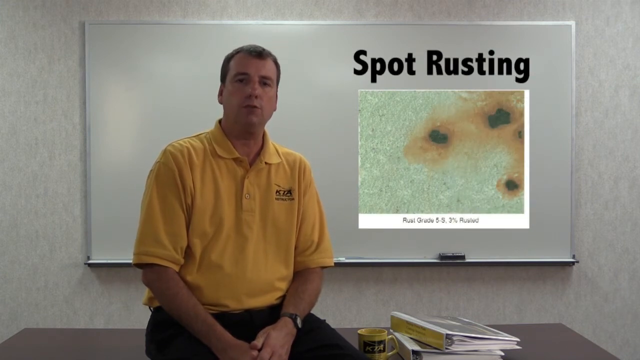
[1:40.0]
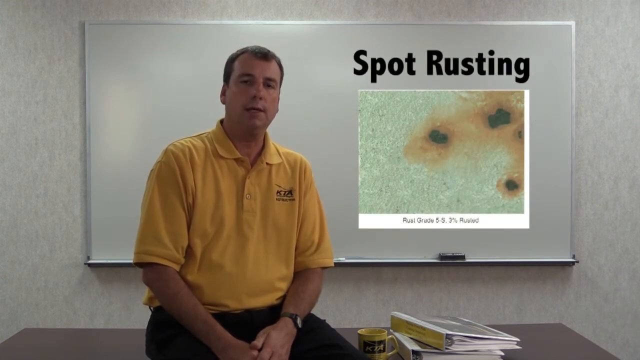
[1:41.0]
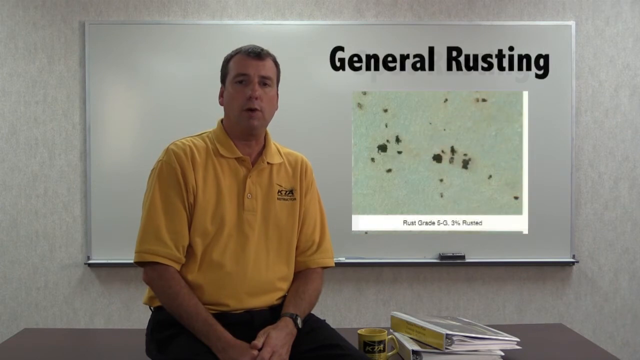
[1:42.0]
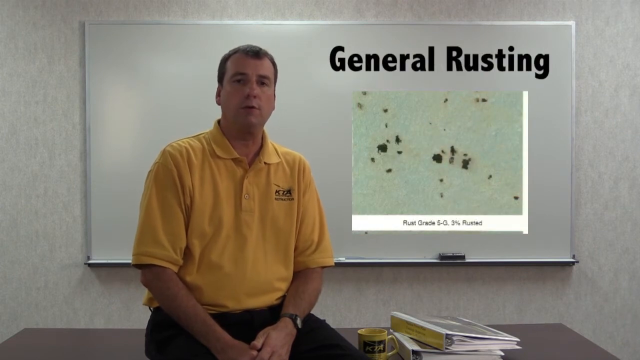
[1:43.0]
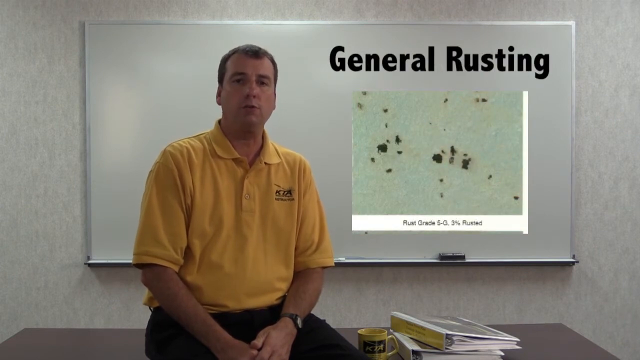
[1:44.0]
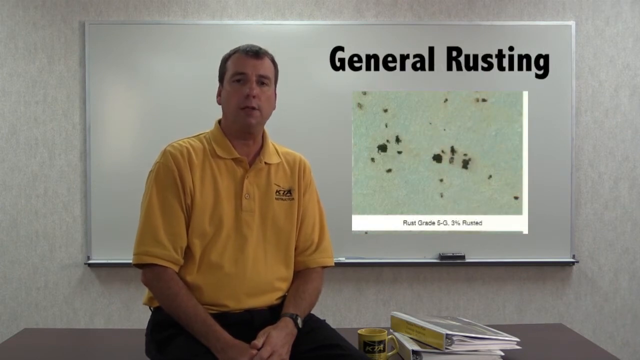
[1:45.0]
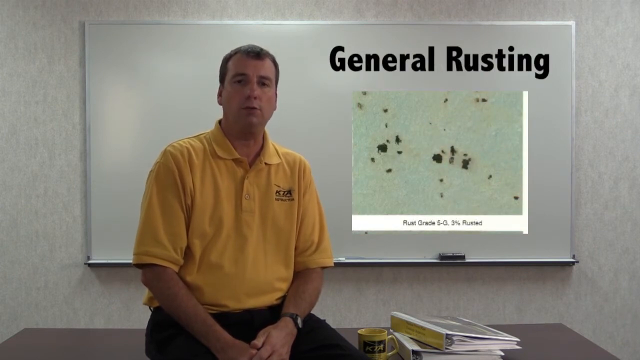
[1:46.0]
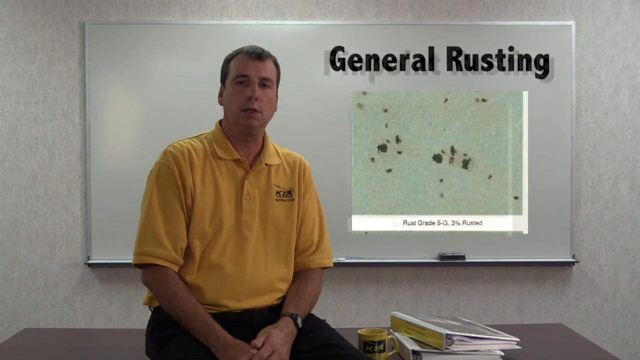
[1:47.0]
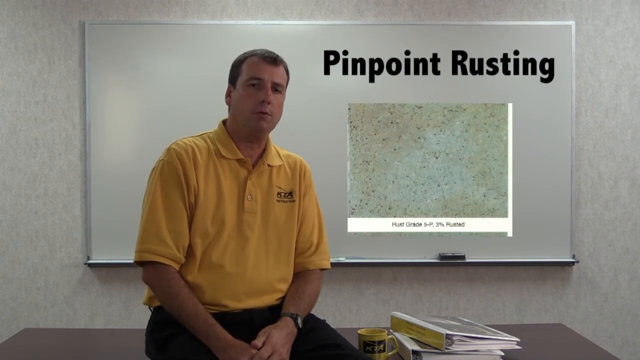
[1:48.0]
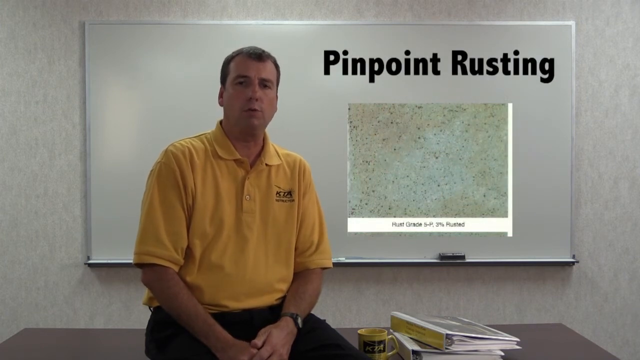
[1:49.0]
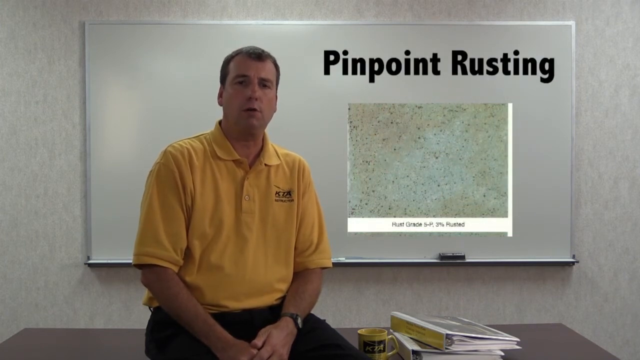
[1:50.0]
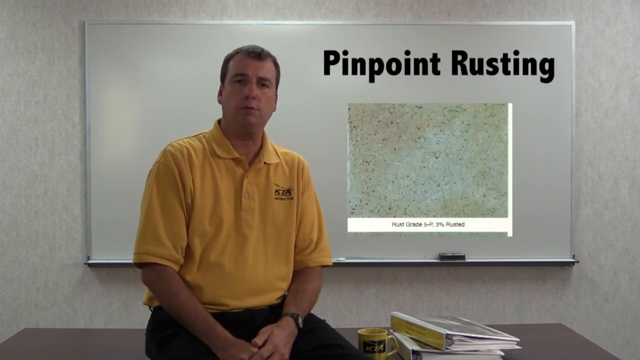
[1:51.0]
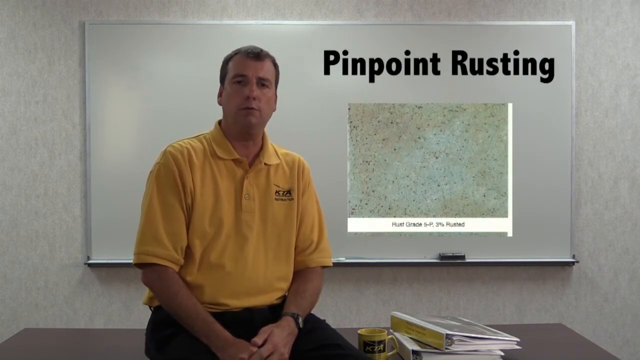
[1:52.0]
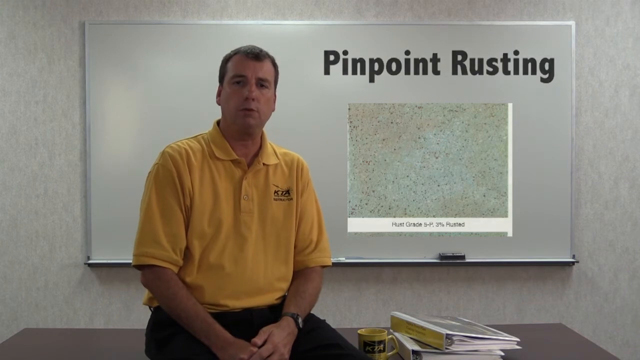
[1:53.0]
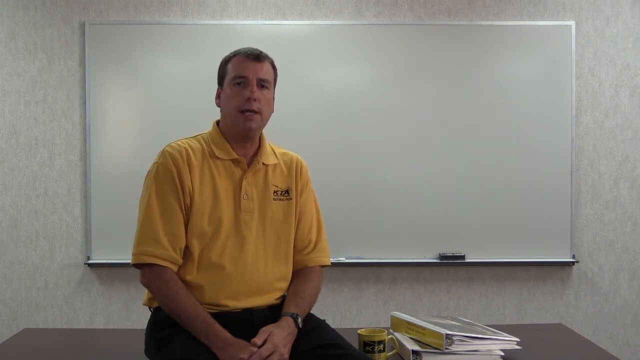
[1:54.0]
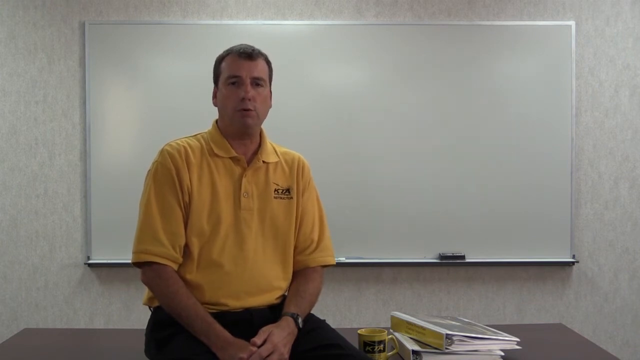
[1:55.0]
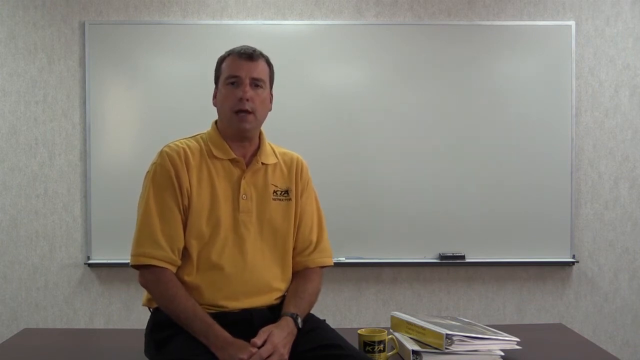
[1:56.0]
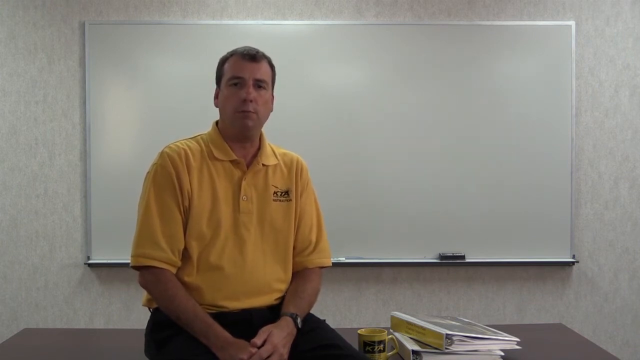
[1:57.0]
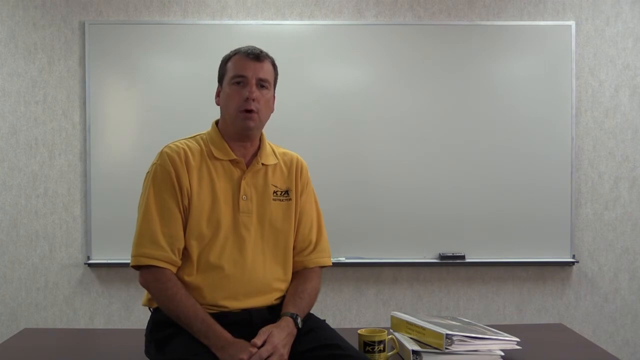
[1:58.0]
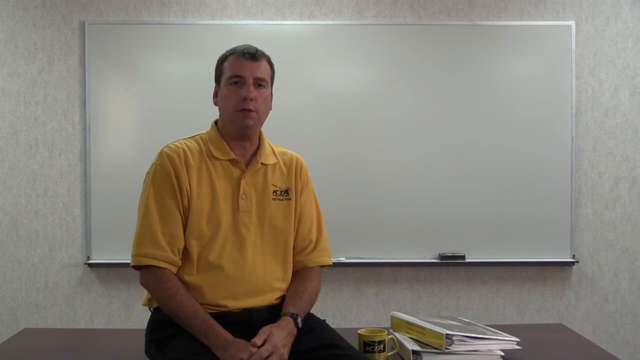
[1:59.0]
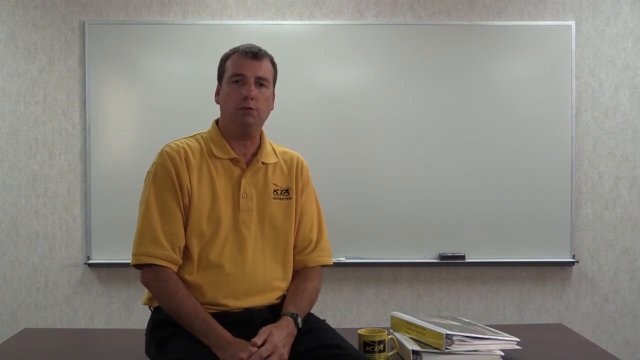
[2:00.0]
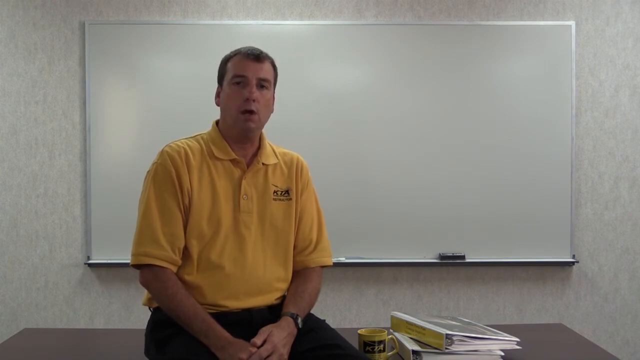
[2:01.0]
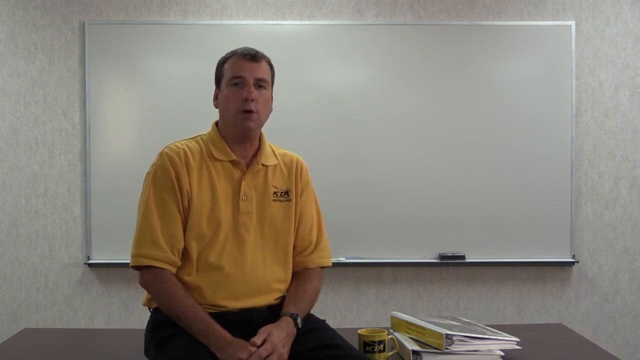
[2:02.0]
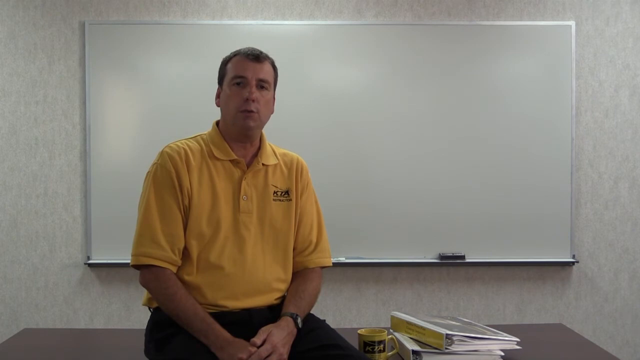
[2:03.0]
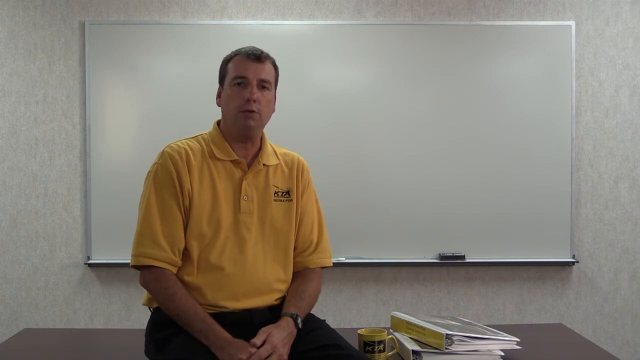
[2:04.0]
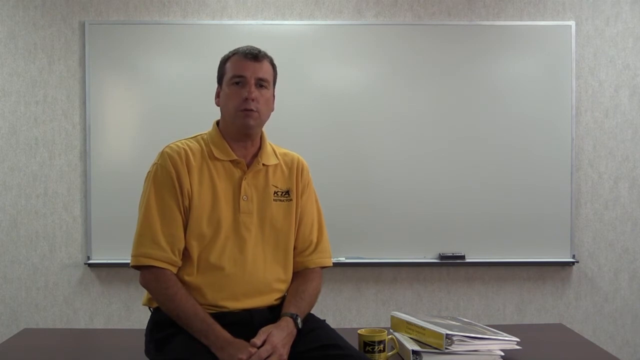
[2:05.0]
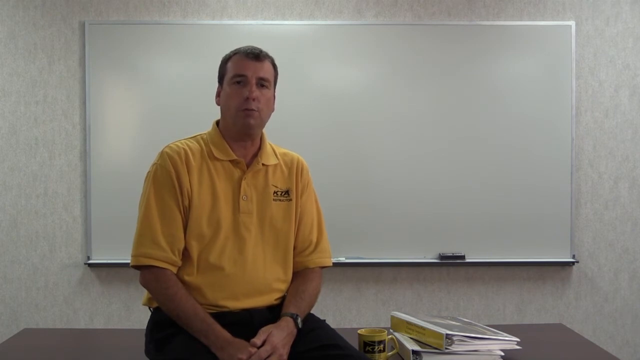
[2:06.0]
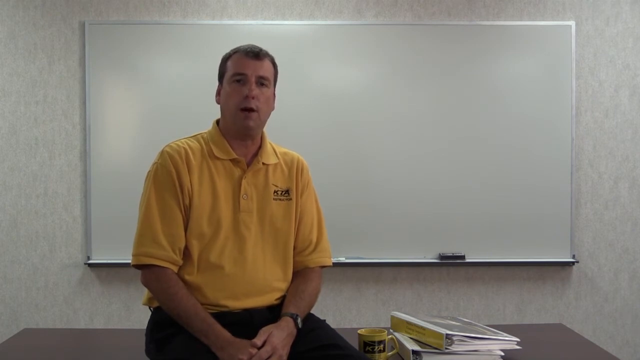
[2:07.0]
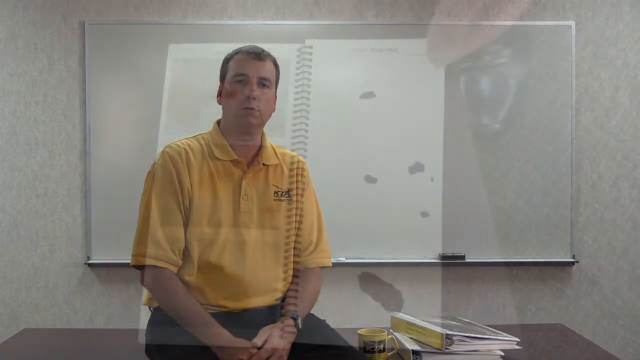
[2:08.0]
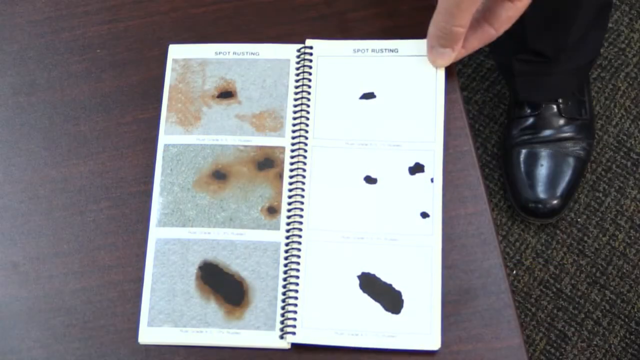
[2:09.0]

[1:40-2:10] Spot rusting, general rusting over the whole surface, and pinpoint rusting are shown. The lecturer wears a yellow t-shirt, a watch on his hand and black shoes. There are notes and a mug on the table, and a whiteboard behind the lecturer. The spot rusting looks worse than the general and pinpoint rusting.